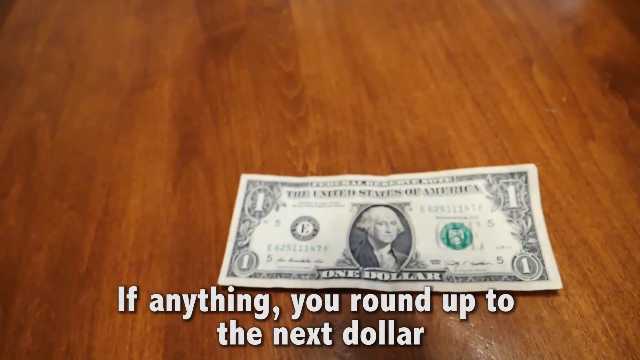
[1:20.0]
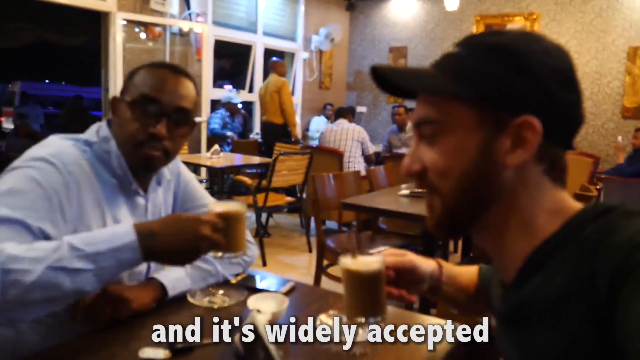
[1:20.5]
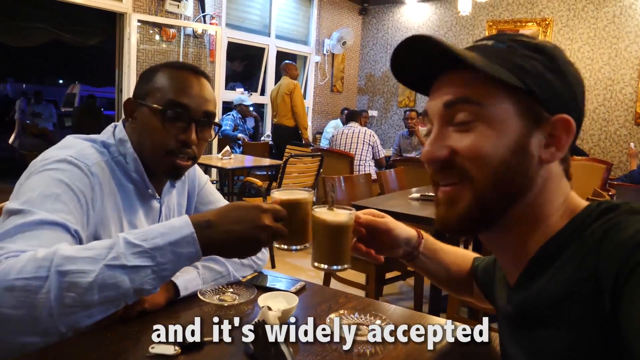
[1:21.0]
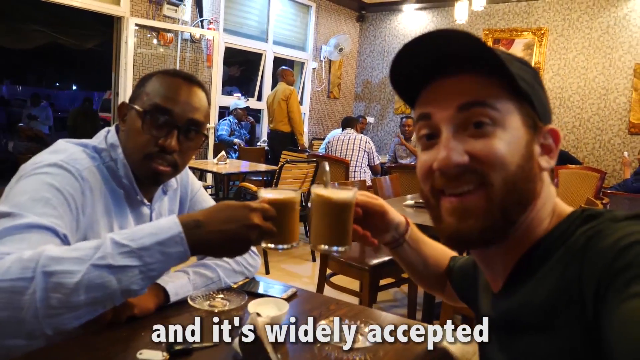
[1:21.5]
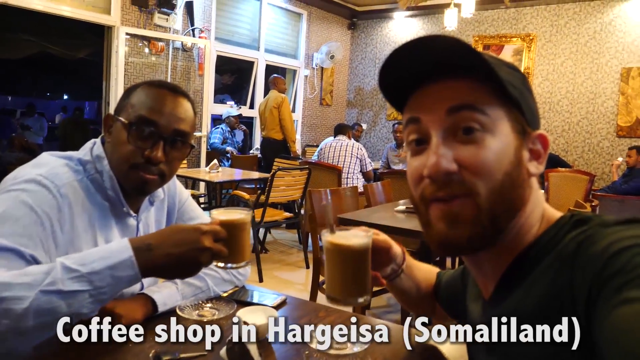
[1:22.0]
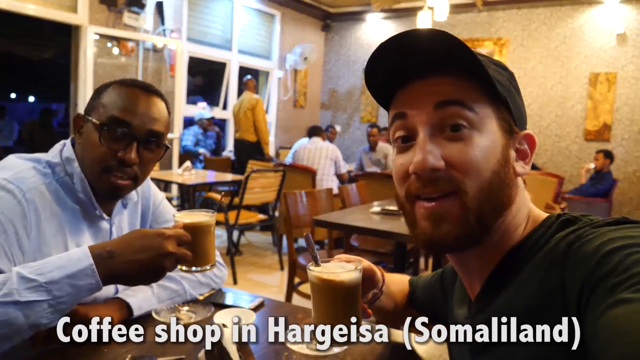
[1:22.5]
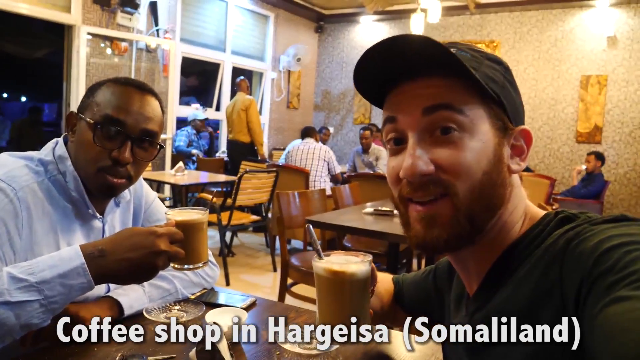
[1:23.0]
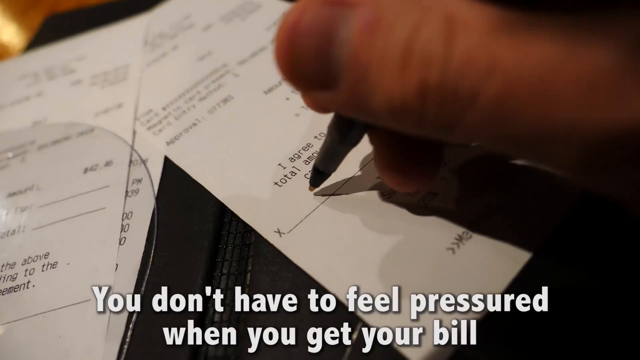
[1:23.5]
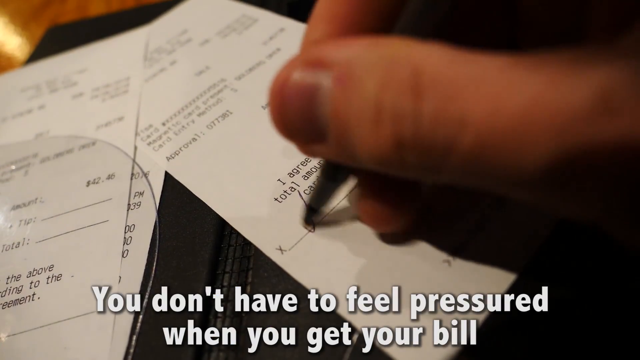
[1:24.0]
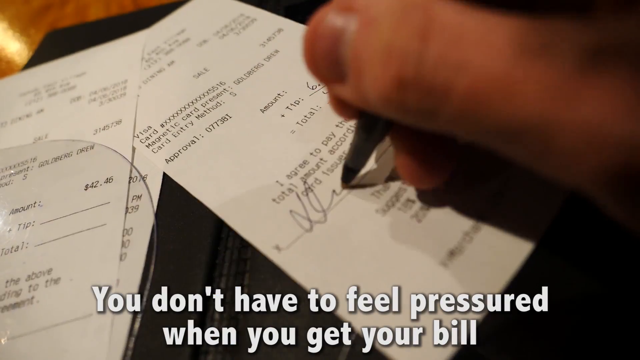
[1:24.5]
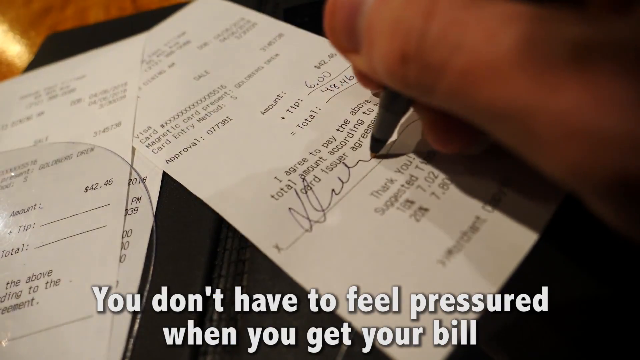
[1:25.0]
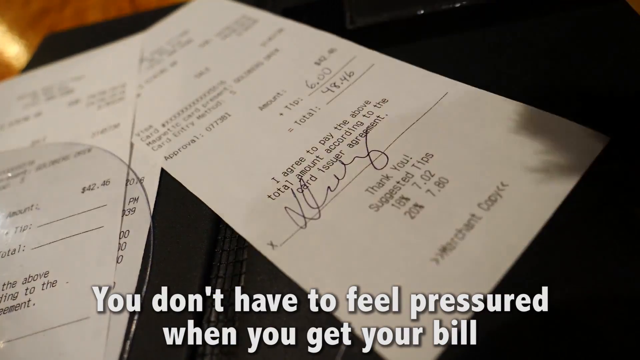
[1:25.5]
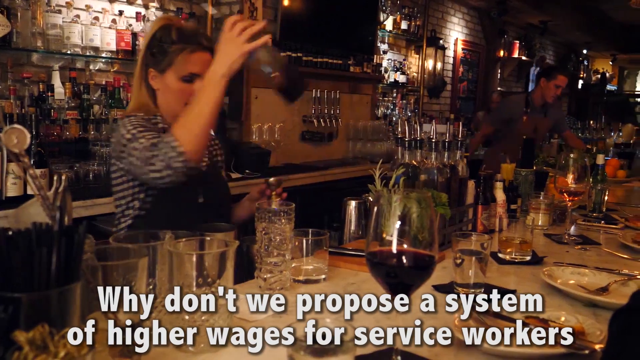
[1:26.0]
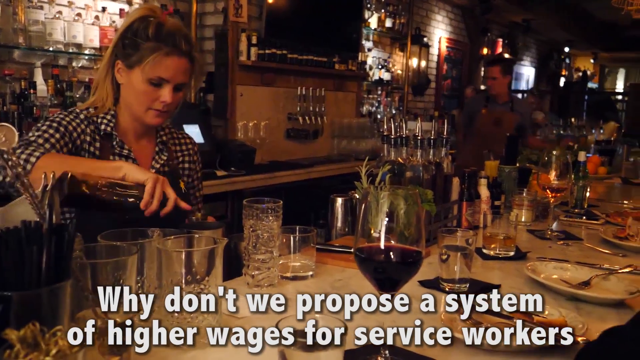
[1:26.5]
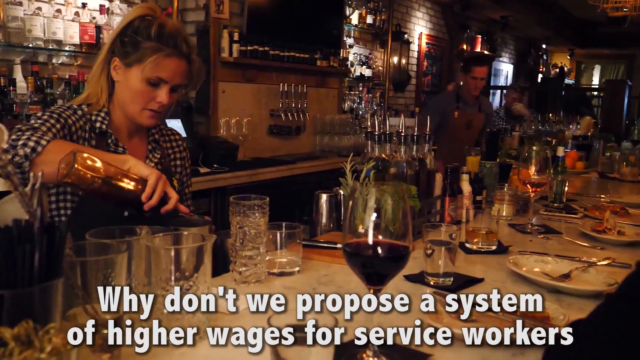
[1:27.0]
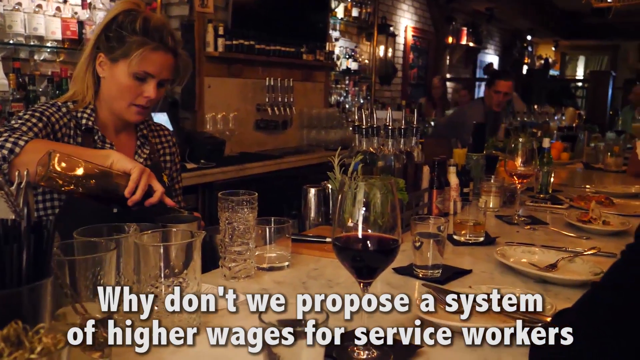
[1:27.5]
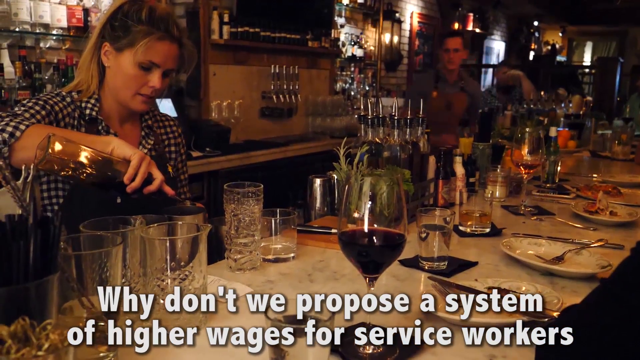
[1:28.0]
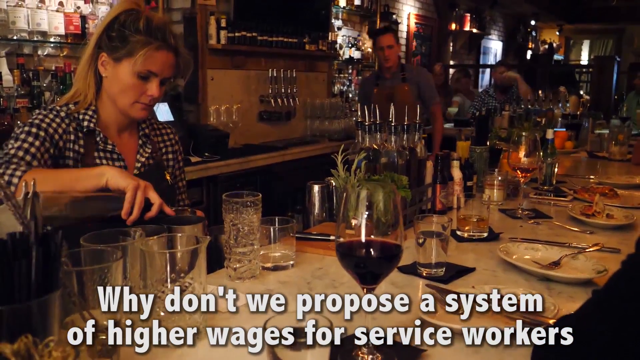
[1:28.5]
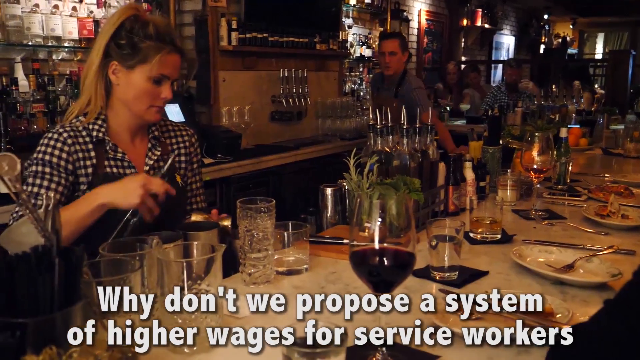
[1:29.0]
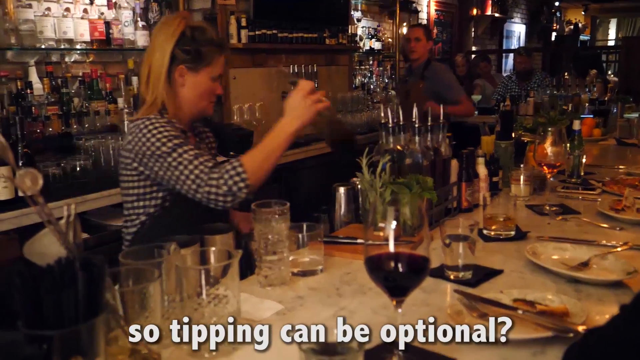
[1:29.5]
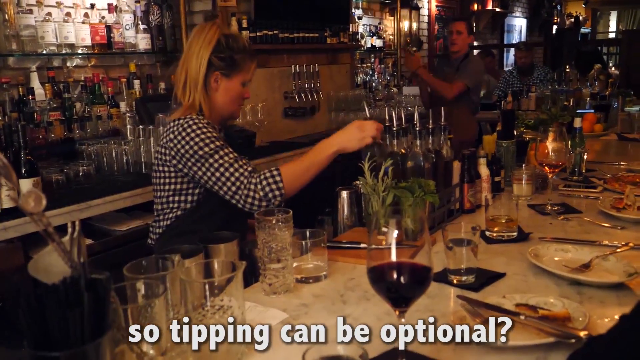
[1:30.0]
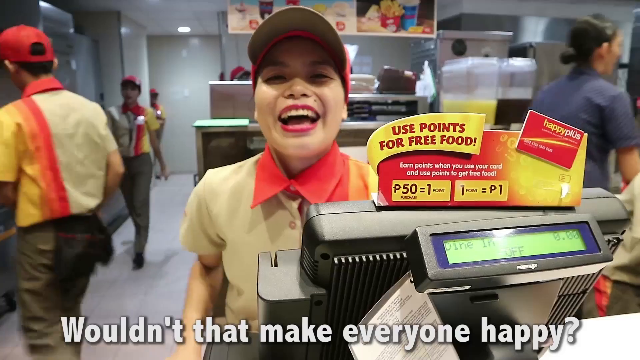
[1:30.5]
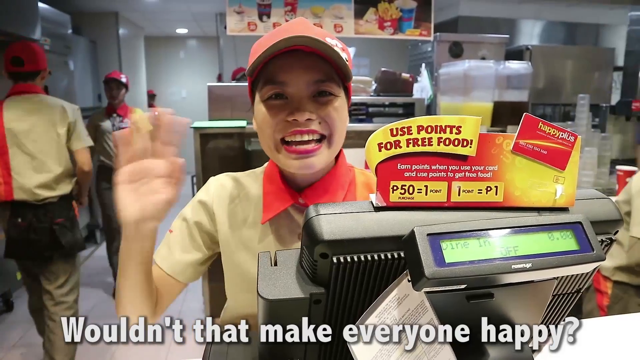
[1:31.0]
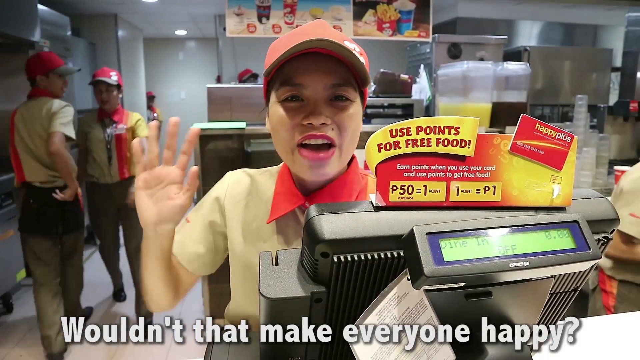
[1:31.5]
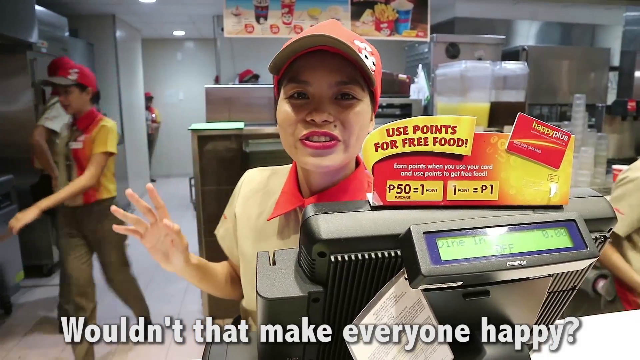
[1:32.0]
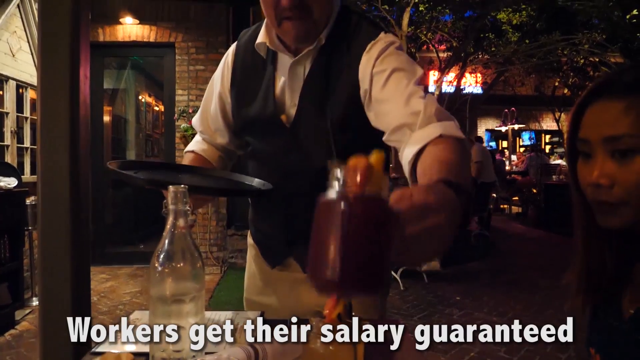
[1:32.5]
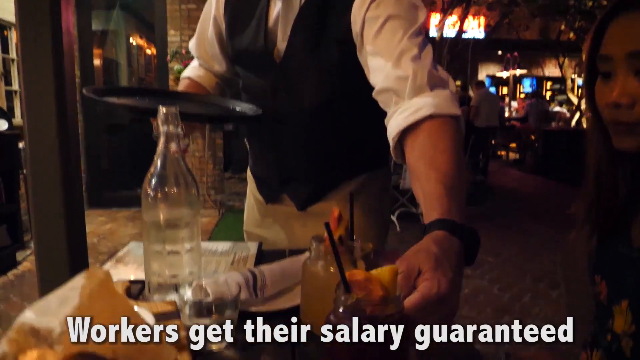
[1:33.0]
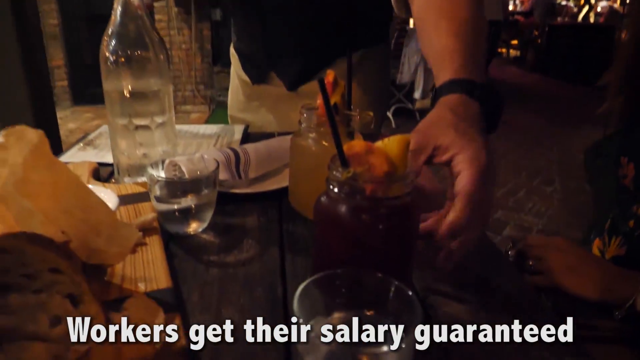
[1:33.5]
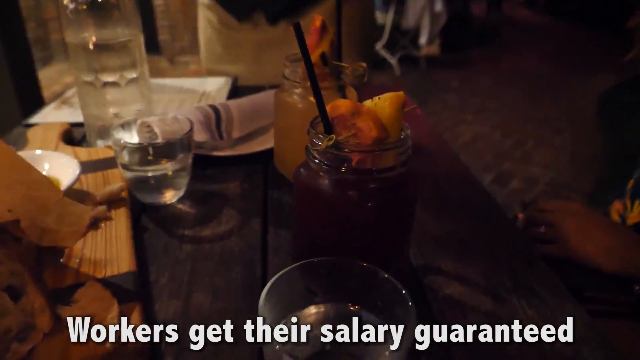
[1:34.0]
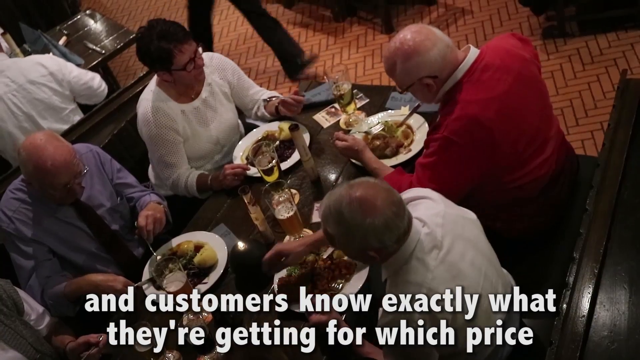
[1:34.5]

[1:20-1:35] The shot zooms out on the dollar on the table, then a man sits at a table facing an African American man. They appear to hold clear glasses of a light brownish coffee drink, hard to tell whether hot or iced. It zooms out and they are signing a white receipt, a person writing on it. Next, at a bar, a woman pours a cocktail and a man in the background pours a cocktail as well; a glass of red wine is in the foreground with a bunch of other plates and glasses on the bar. Then a woman behind a cash register, in a brownish uniform with a red hat and red accents, waves to the camera; she may be working at a restaurant in a company uniform, and the setting appears to possibly be another Asian country. The final scene appears to be at night: a close-up of a table outdoors as a waiter brings a clear mason-jar-like glass holding a darkish purple or pink liquid with a few orange pieces of fruit on top, apparently some type of cocktail.